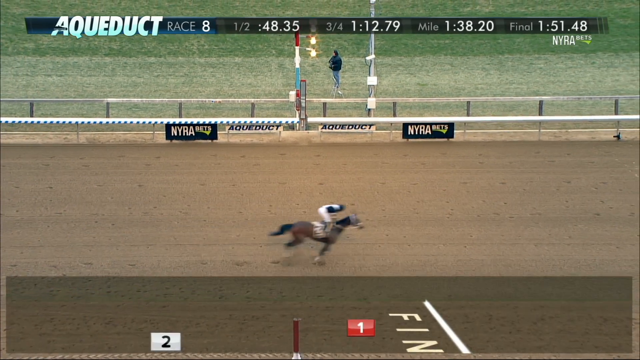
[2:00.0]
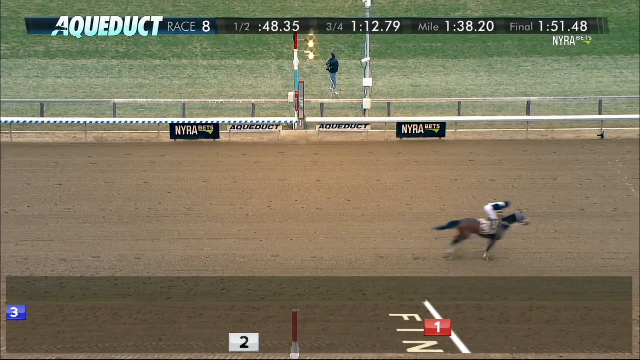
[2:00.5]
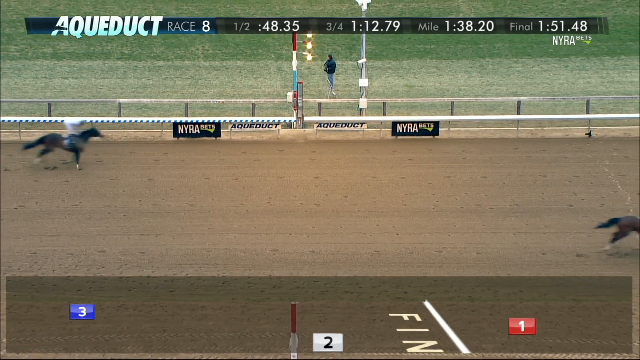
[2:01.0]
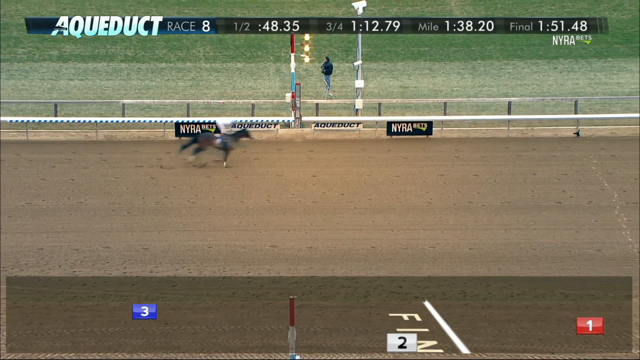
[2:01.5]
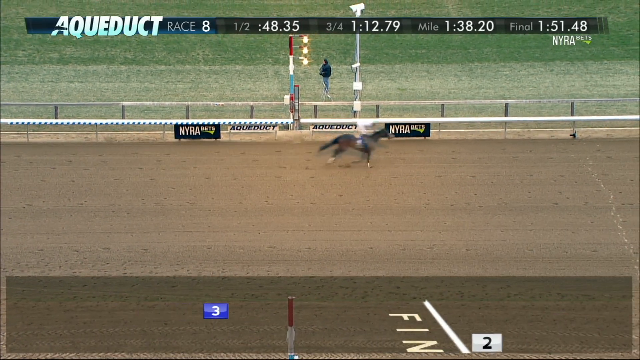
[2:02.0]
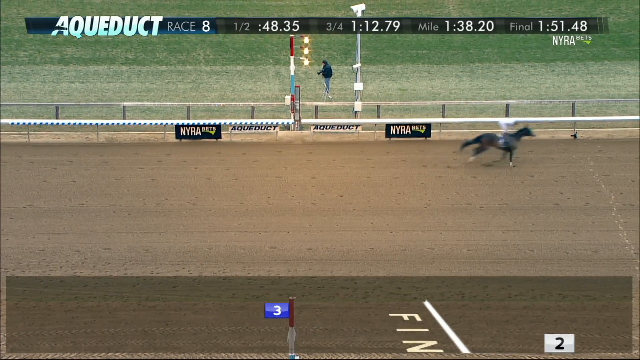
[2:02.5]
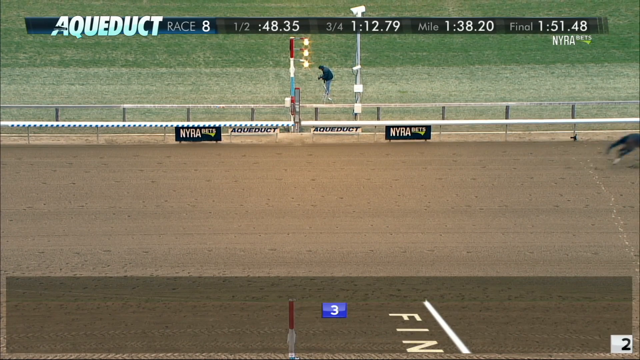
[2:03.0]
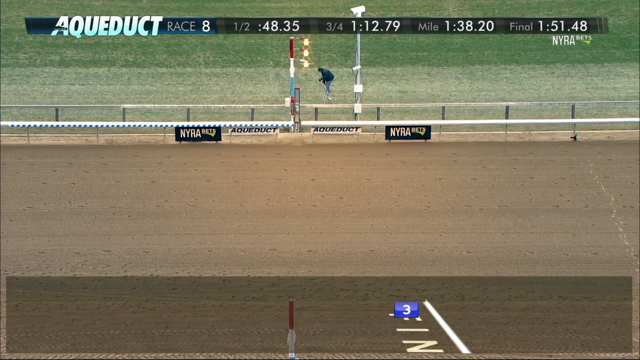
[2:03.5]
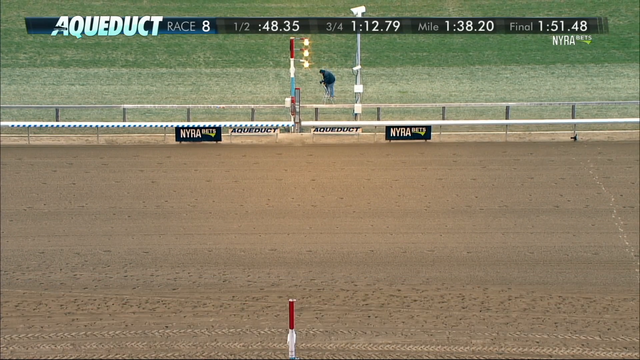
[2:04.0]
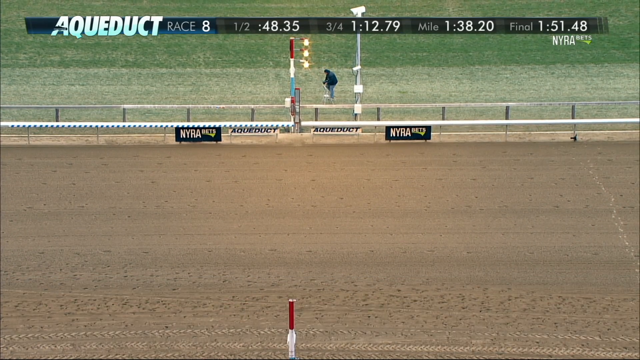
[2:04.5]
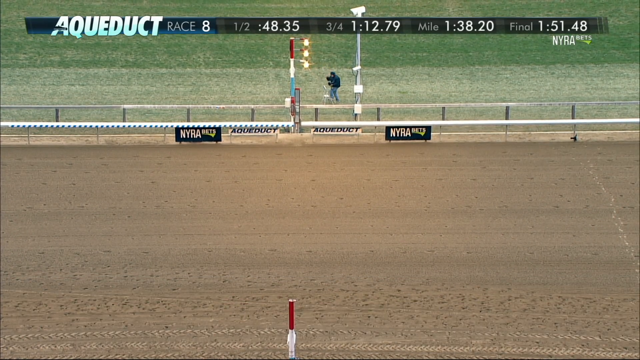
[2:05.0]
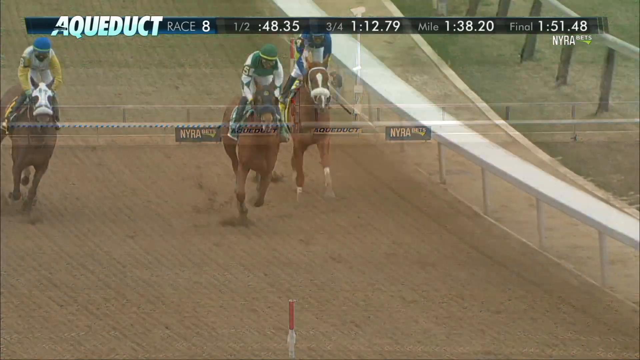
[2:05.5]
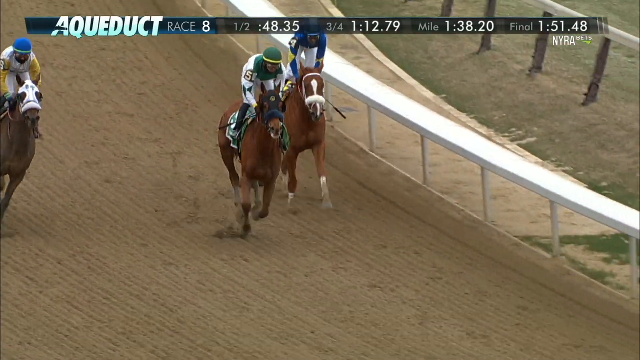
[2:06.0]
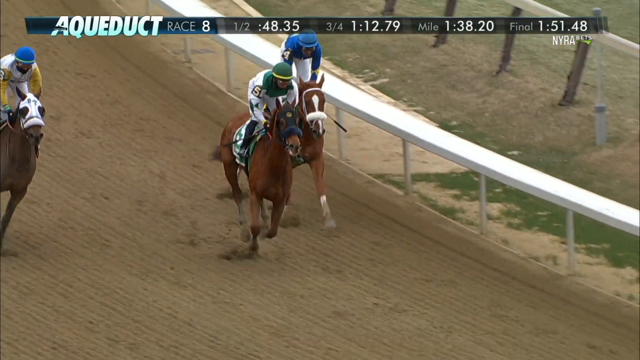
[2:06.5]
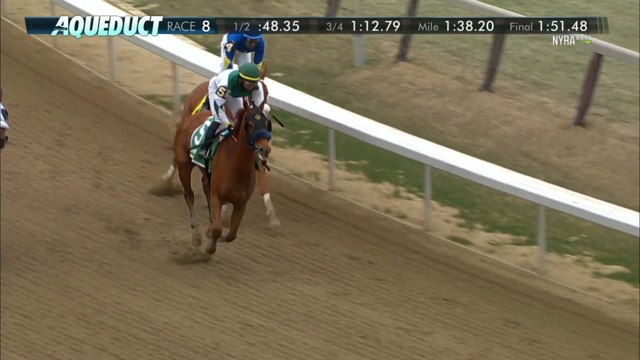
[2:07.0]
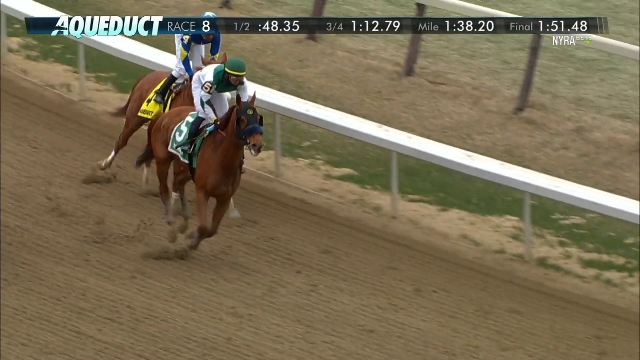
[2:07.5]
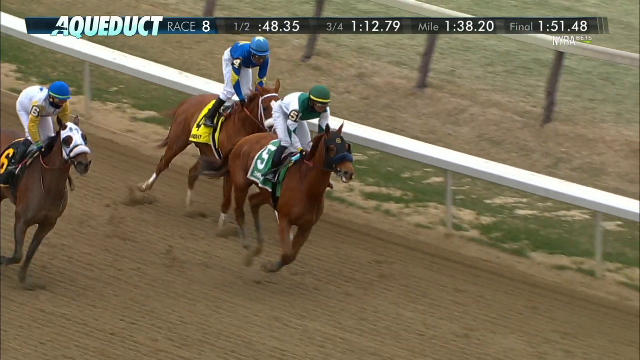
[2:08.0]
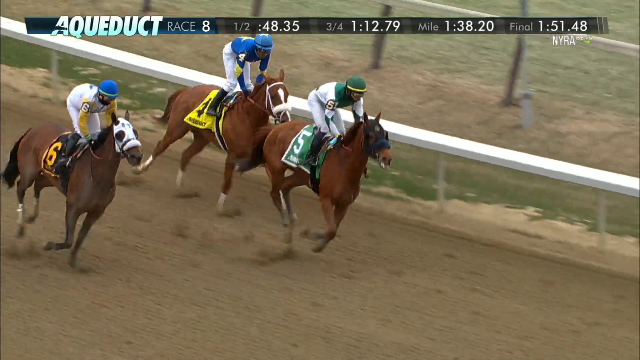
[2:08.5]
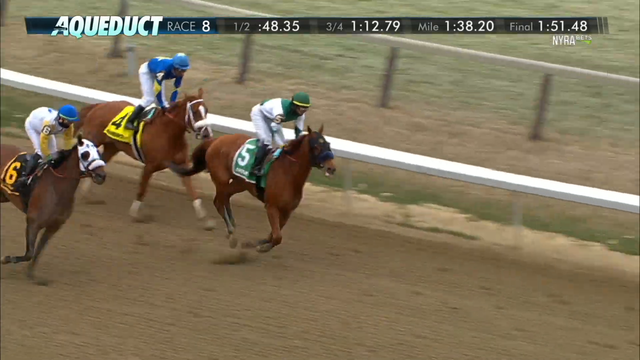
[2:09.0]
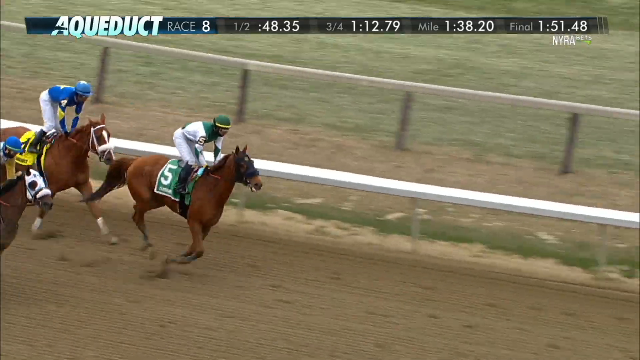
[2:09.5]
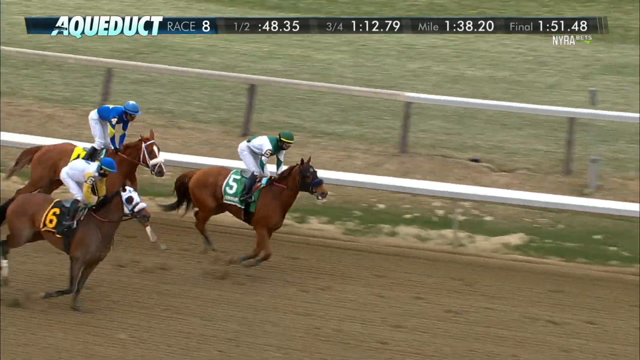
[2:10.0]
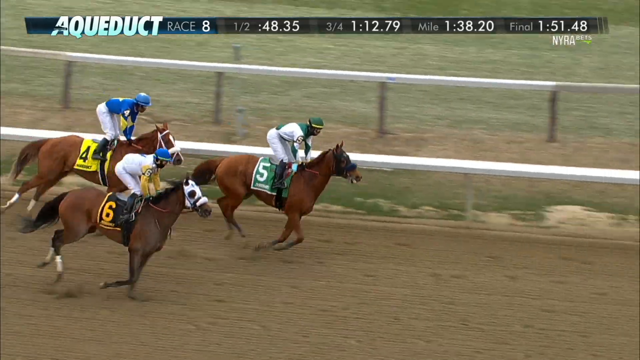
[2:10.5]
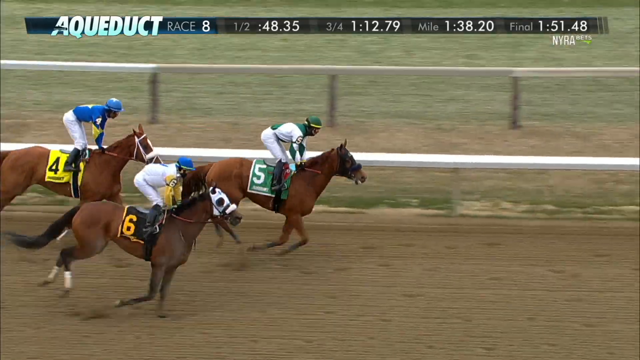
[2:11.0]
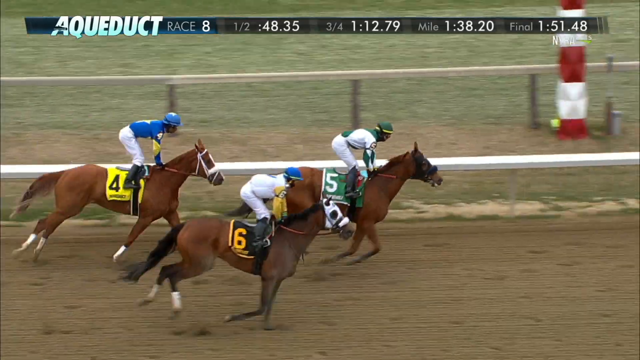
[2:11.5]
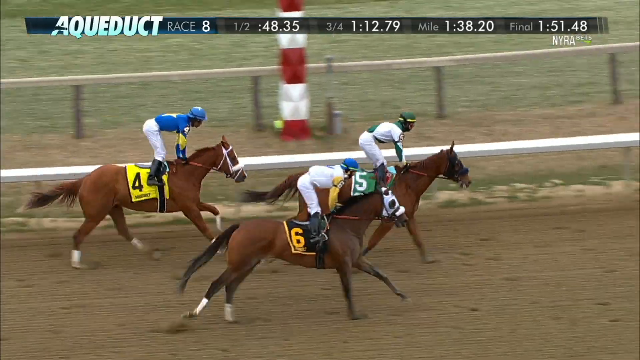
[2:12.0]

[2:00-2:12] The other horses, which were farther back, finish the race, still moving well but not at the same speed. Highlights of the race are then shown from the middle of the race. No crowd is visible from the camera angle; the camera was apparently positioned in the crowd.